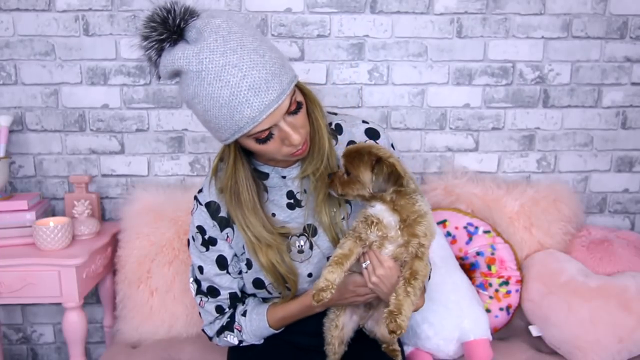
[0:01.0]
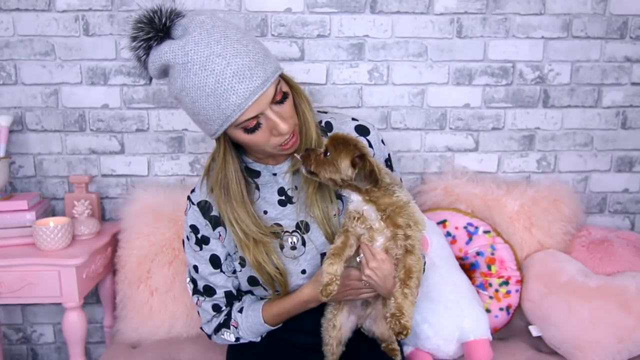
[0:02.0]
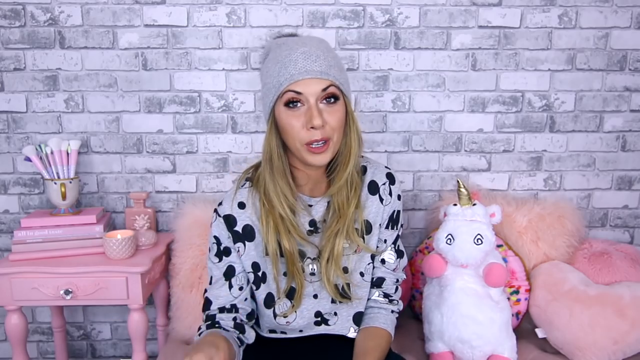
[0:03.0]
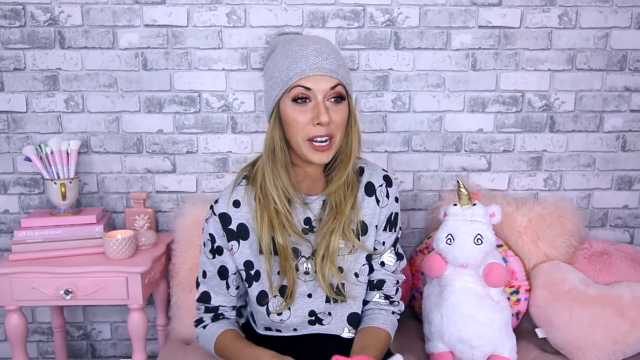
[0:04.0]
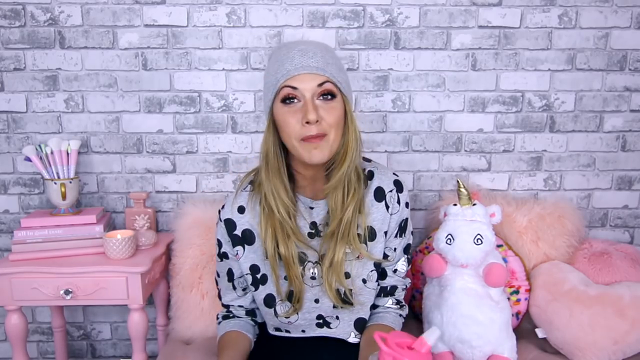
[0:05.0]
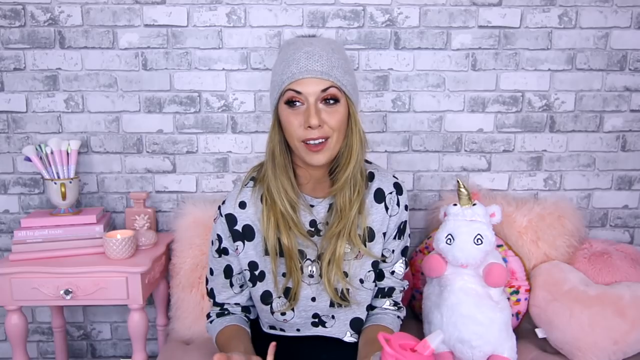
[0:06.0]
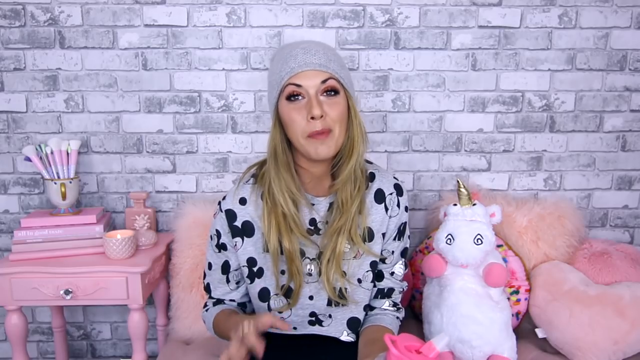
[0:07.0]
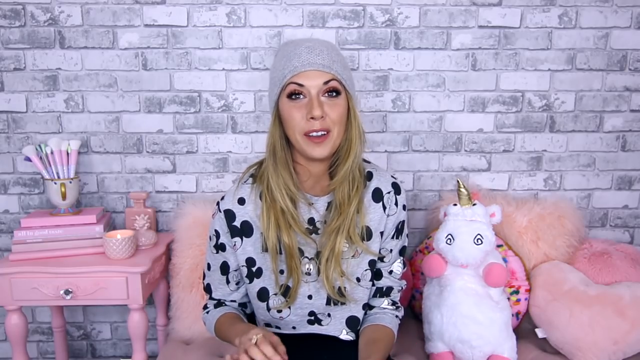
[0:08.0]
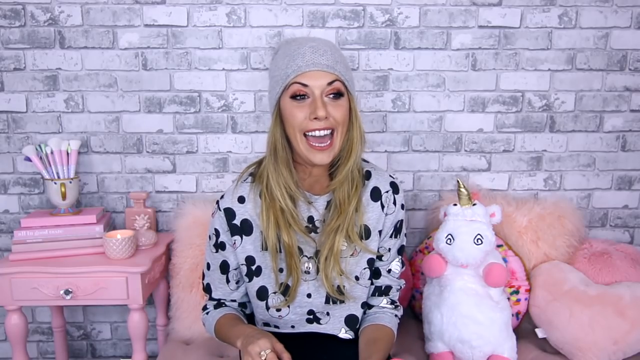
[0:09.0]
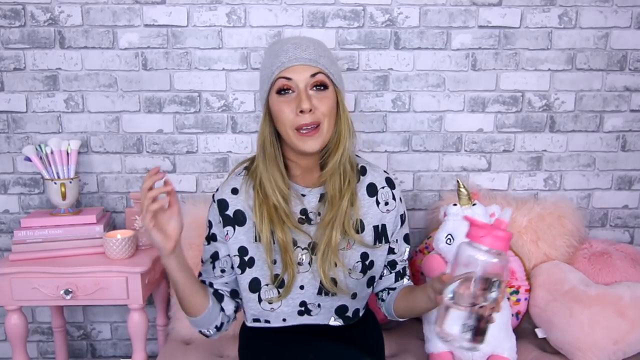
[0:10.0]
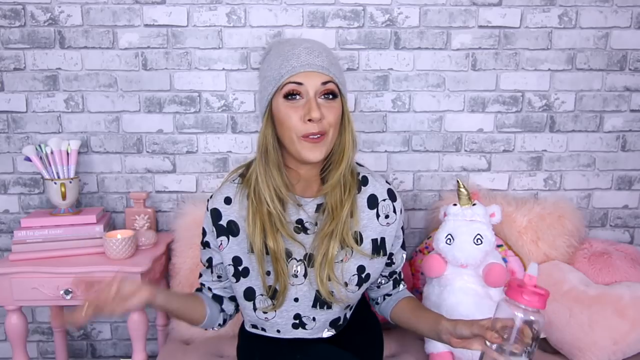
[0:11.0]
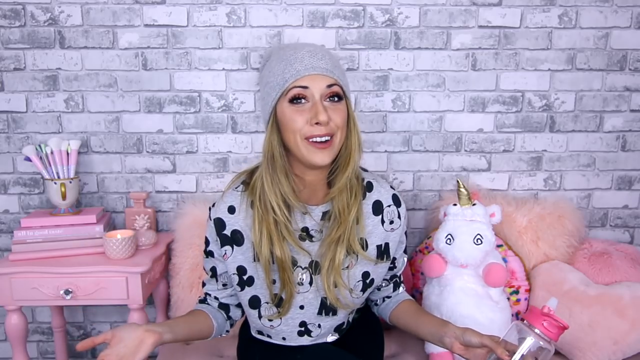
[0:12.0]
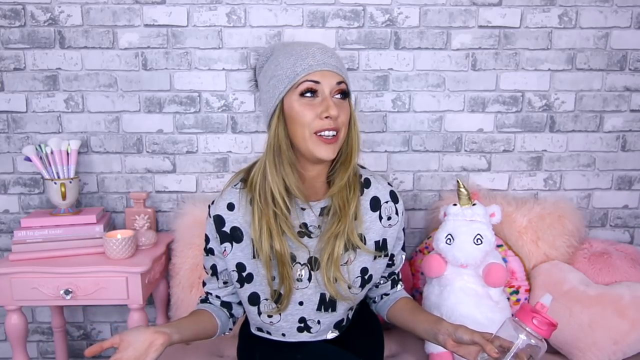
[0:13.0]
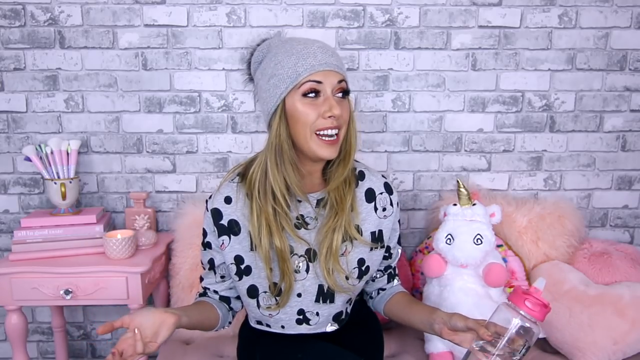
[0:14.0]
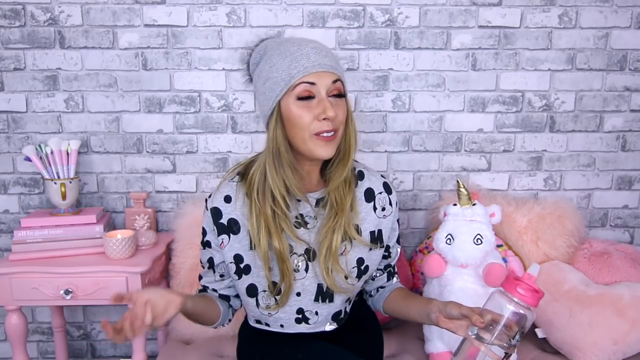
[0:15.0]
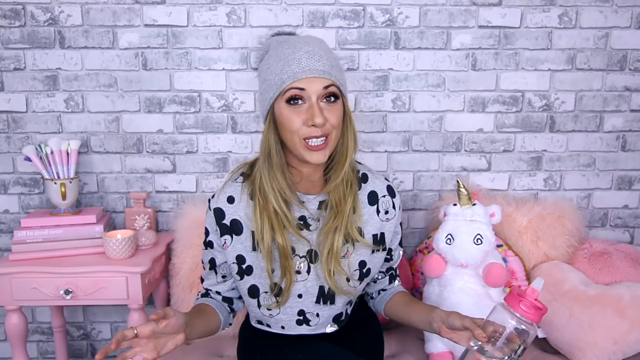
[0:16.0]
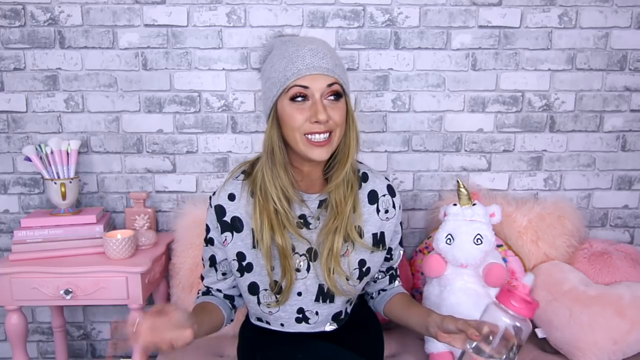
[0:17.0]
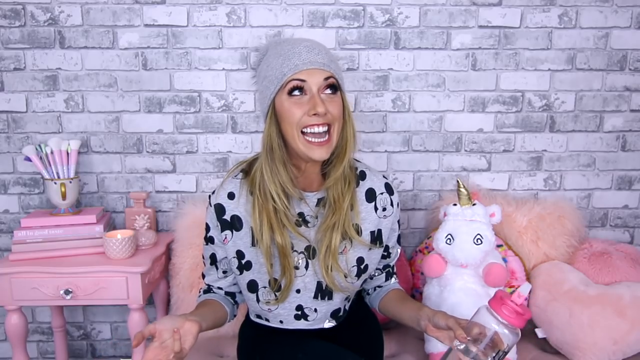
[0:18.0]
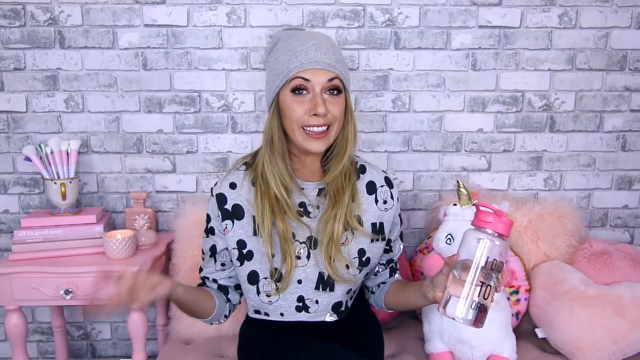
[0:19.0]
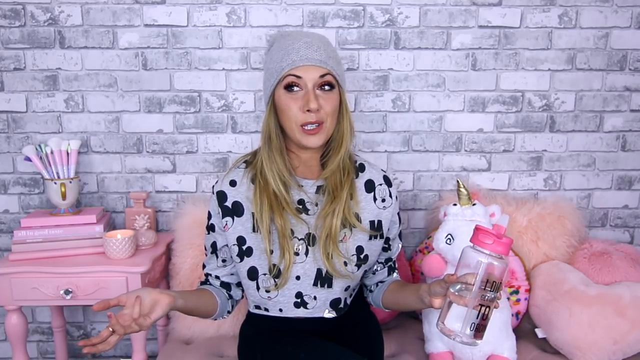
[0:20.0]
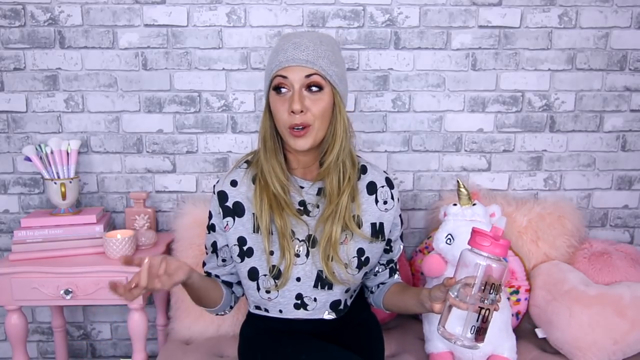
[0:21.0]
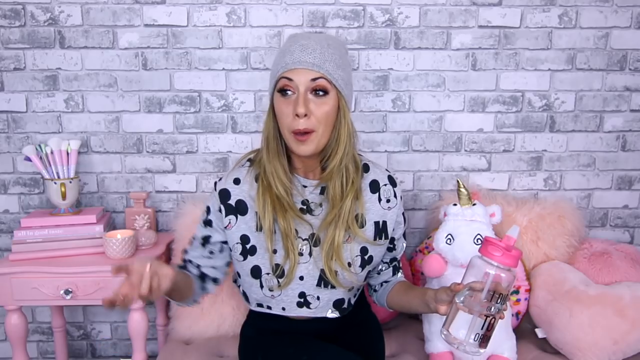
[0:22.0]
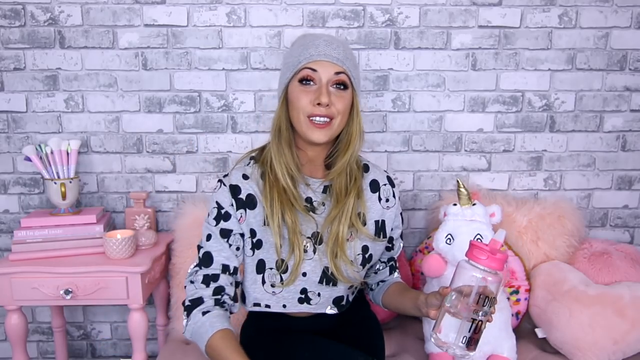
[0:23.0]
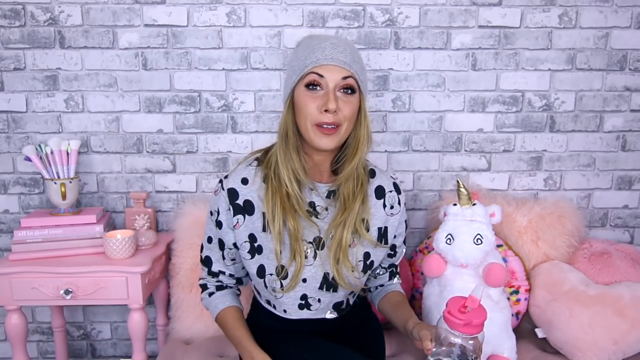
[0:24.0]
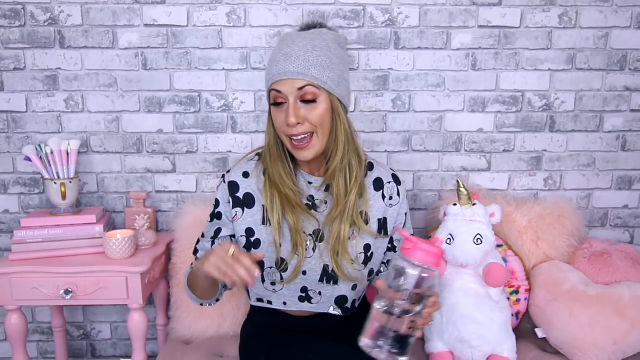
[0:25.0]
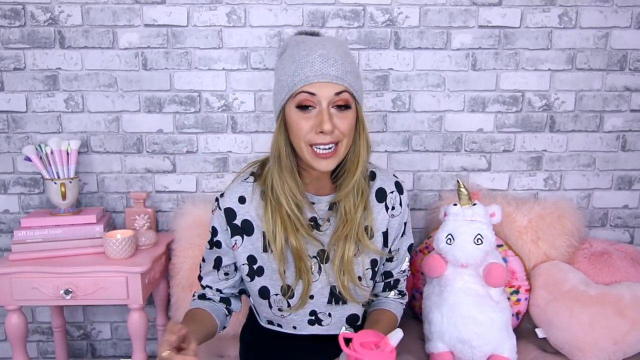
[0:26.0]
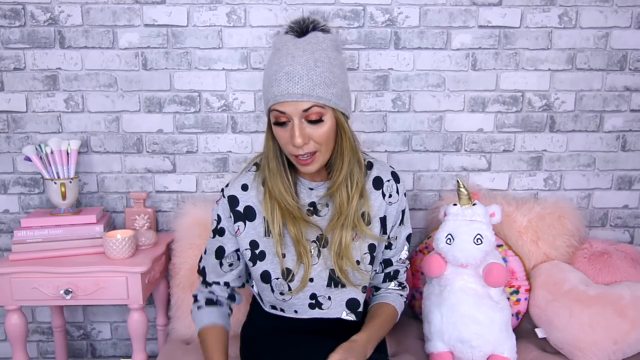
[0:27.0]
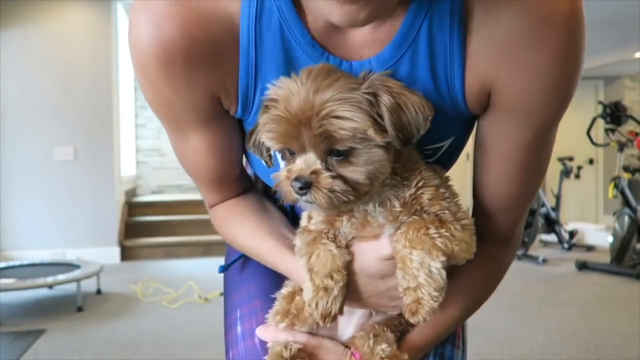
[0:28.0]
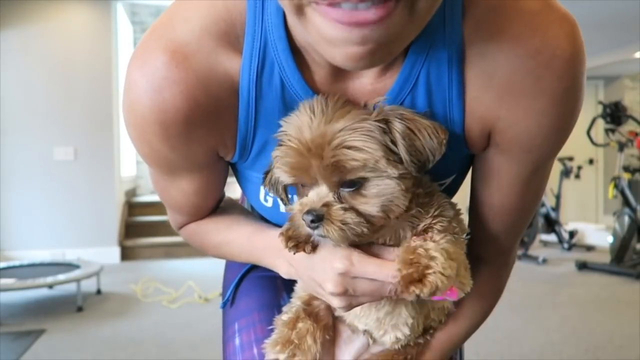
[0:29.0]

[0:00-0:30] A woman holds a small dog on a pink couch, and there is a pink stool with some other items in different shades of pink on top of it. The wall behind her has a light grey brick design. The woman begins to talk to the camera; she wears a grey hat and a grey top with a black dog-like design on it. She has a feeding bottle with a pink lid in her left hand as she continues to talk. A close-up shot then shows possibly the same woman holding possibly the same dog close to her chest while bending down a bit. Here she wears a sleeveless blue top and purple leggings, and she seems to be in a gym, as some gym equipment is visible in the background behind her on the right side of the screen. The video then briefly shows her outside, wearing a black sleeveless top.